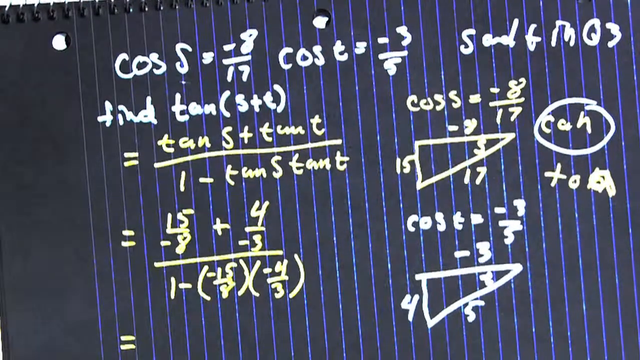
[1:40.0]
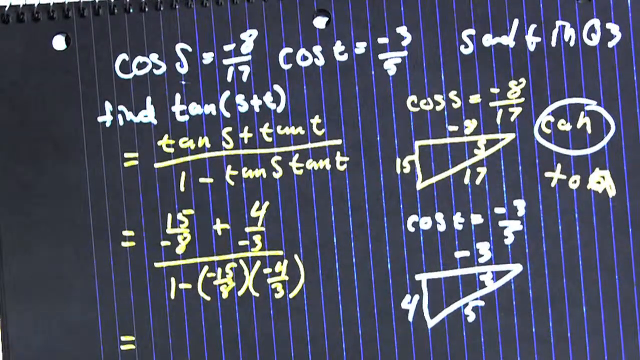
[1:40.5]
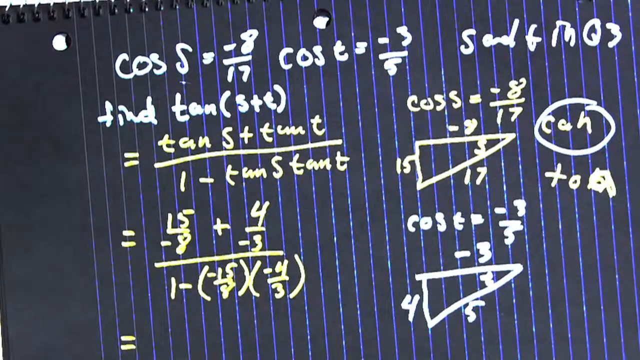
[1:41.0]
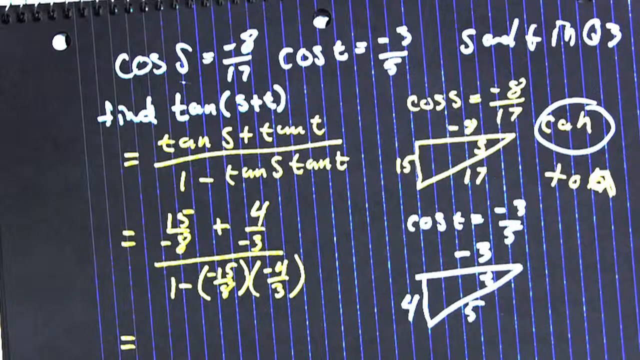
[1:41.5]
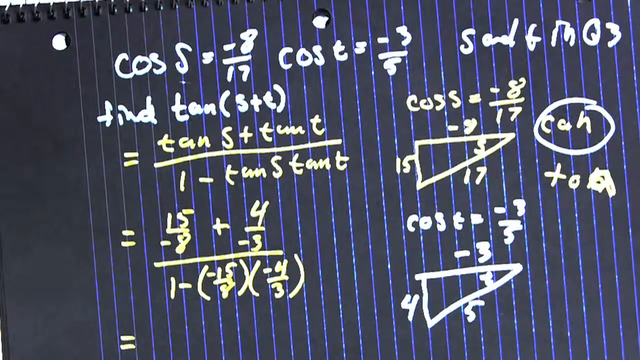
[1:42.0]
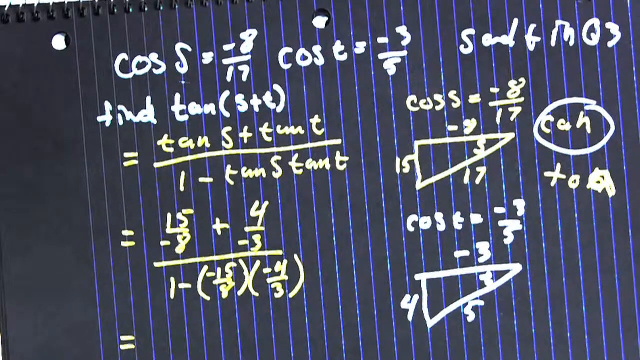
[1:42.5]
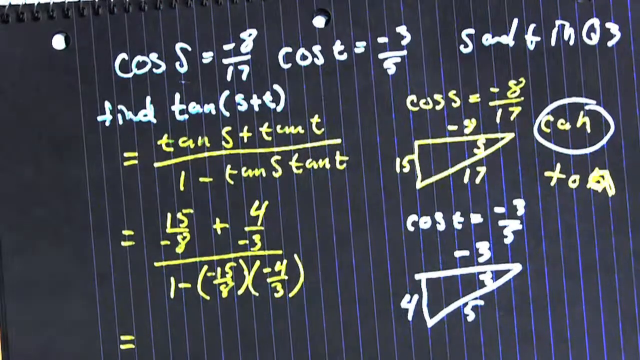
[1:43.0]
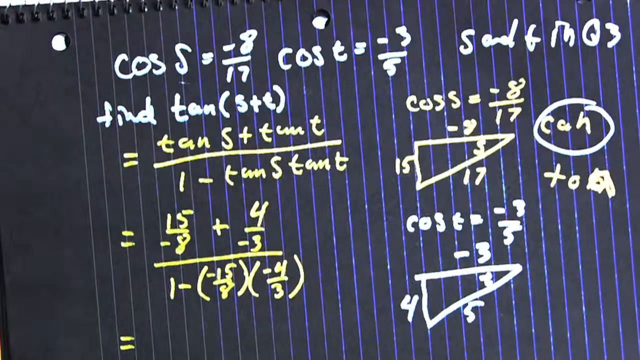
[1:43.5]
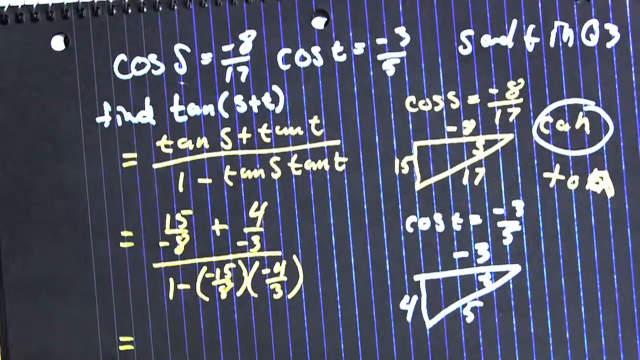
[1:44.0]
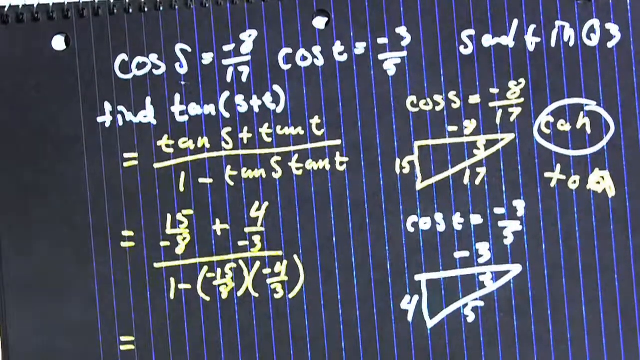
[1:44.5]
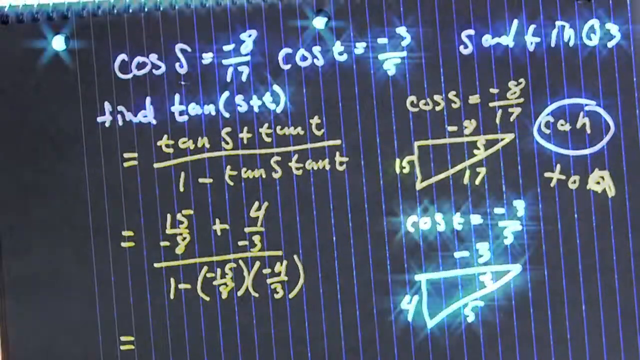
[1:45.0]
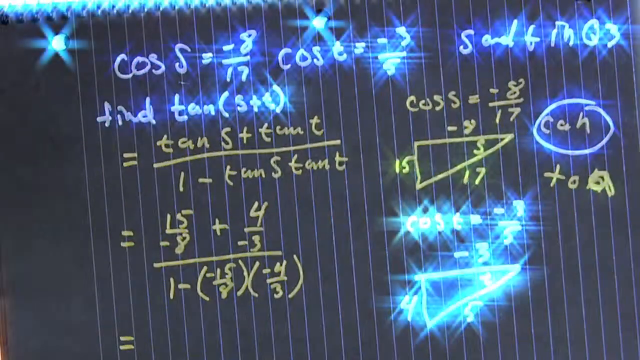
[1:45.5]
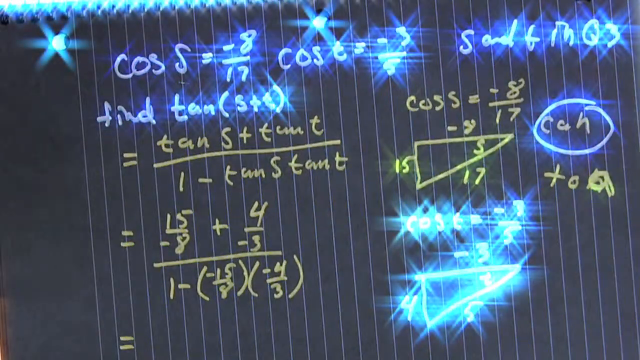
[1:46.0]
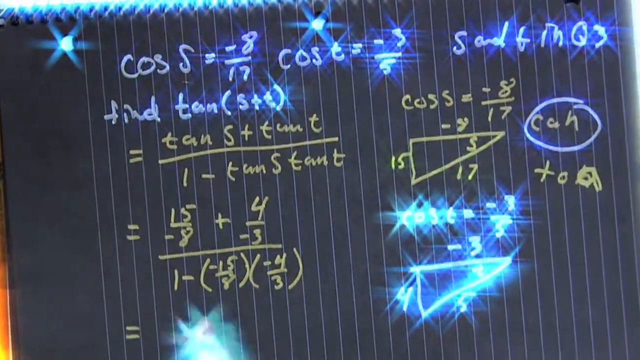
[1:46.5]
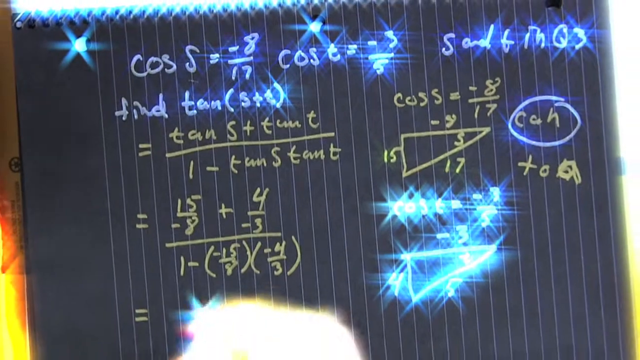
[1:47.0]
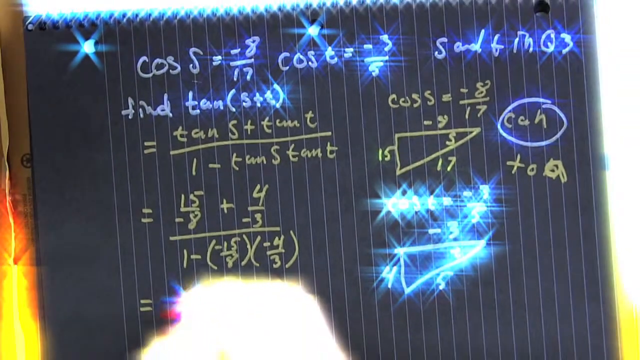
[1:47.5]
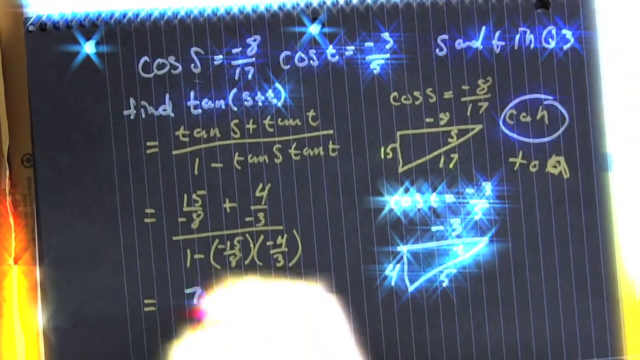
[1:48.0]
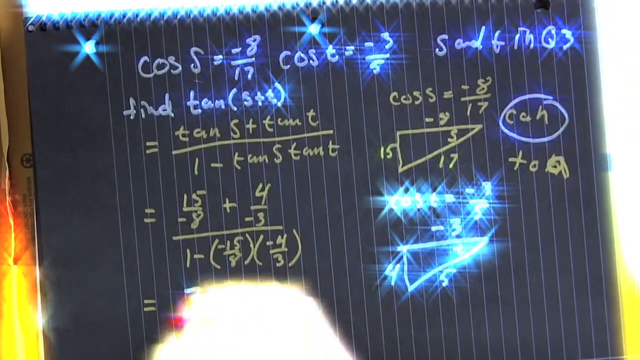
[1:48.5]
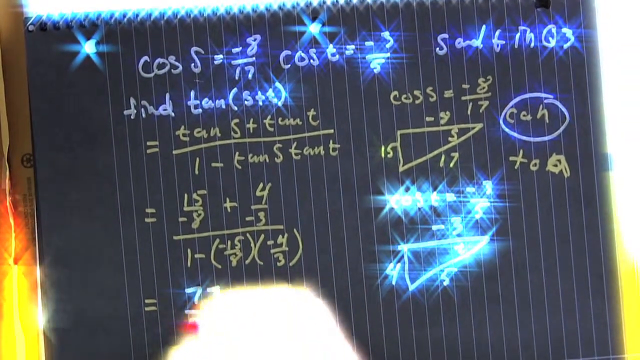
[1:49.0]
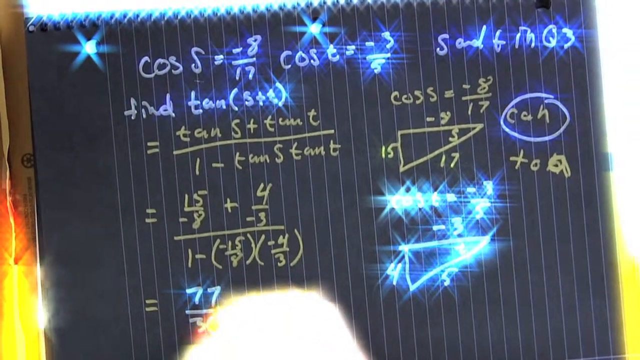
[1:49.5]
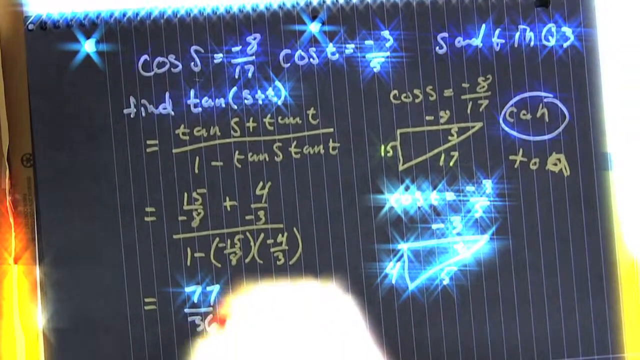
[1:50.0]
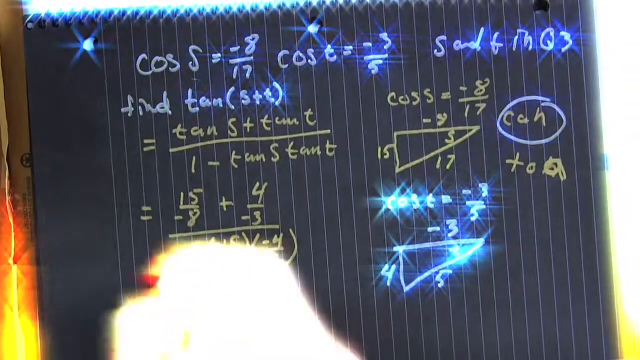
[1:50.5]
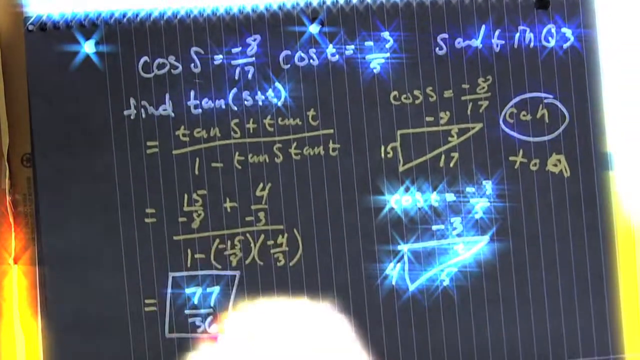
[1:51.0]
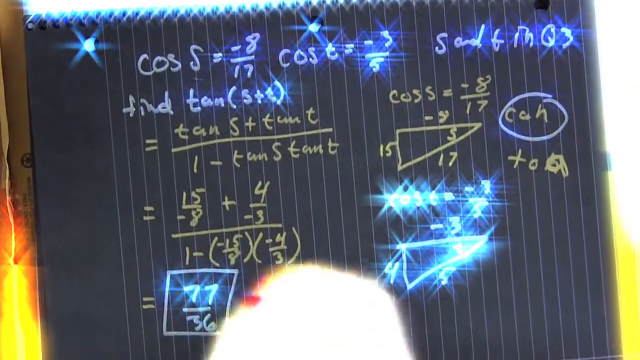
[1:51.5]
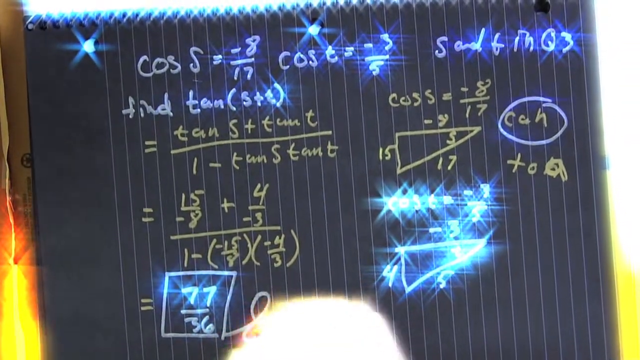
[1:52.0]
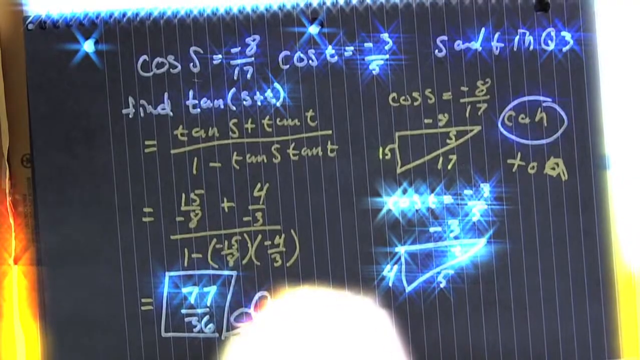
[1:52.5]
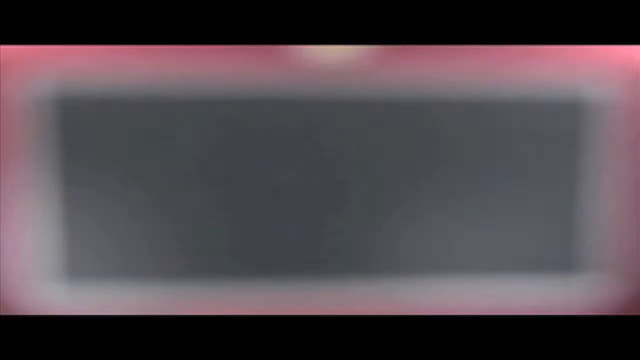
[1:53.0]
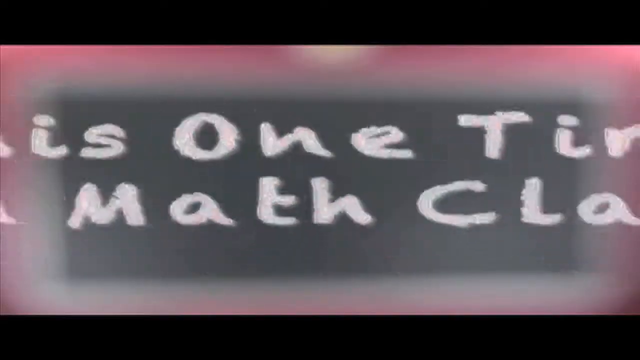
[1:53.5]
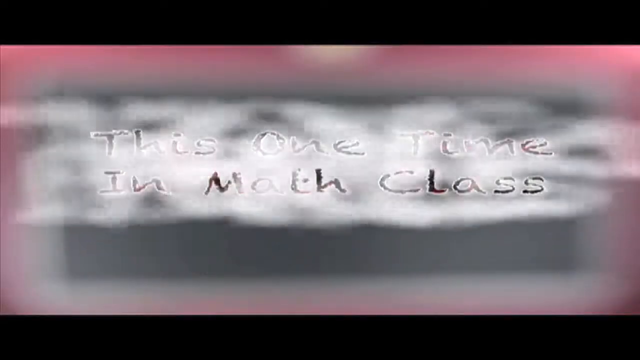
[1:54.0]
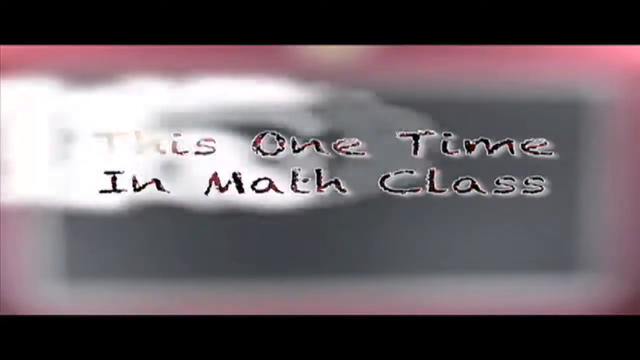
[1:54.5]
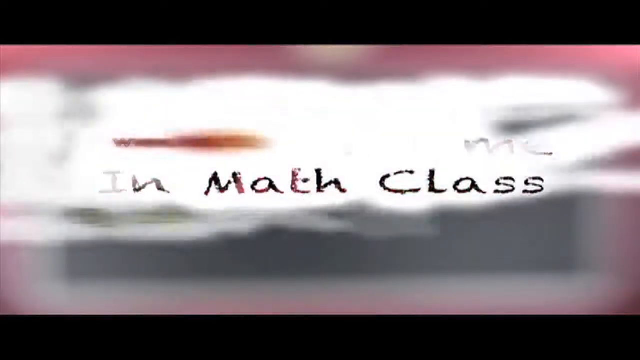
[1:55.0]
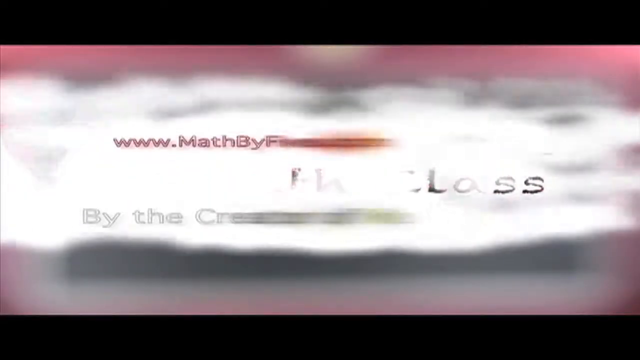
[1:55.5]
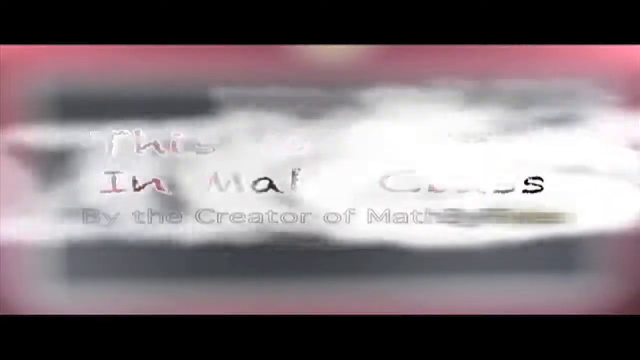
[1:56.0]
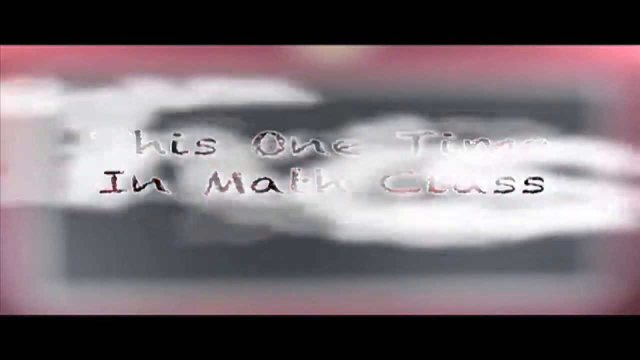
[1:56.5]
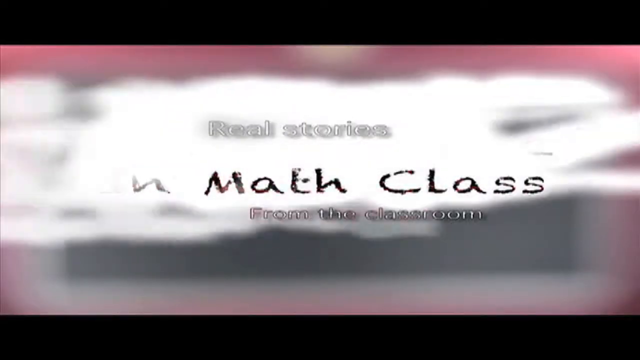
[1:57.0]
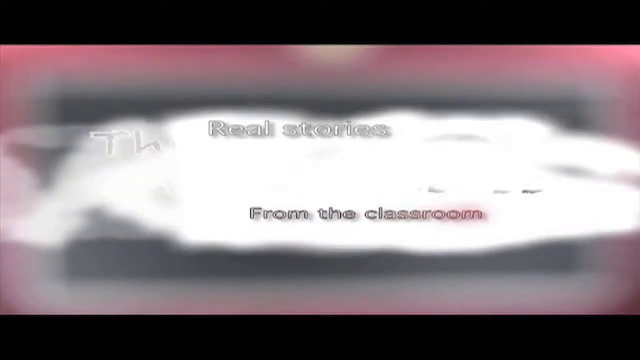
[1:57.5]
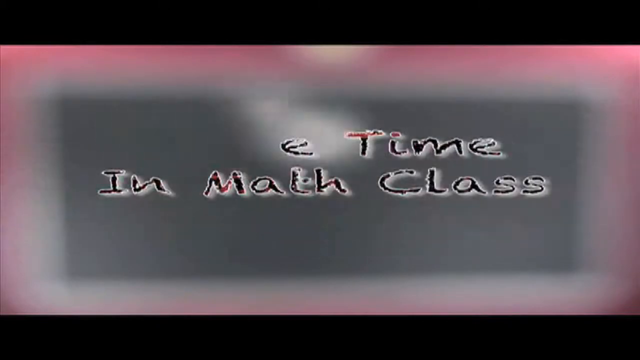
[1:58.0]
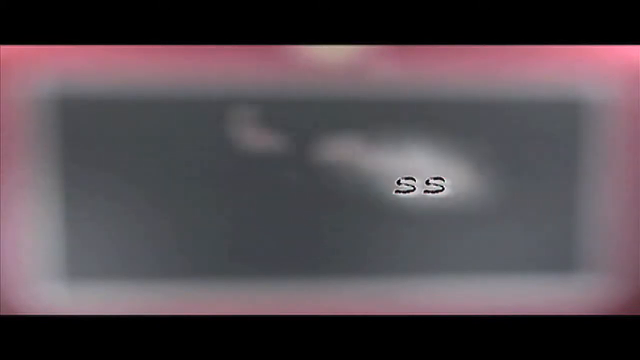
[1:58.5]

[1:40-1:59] The long formula the man wrote is shown. A flash of light passes over the holes in the piece of paper and over some of the task's data: cosine S, cosine T, the data for S and T, the data written in white marker for cosine T, and the Pythagoras drawing for cosine T. The man then writes the result, the answer to the problem: 77 to 36. After the result he draws a flower, possibly his icon. Finally, text appears: "this one time in math class" and a link to the teacher's website, "www.mathbyfives.com".